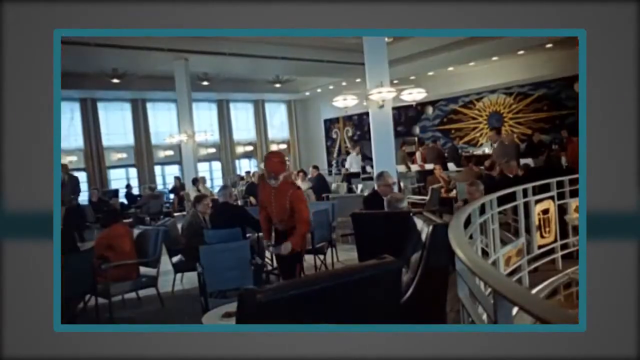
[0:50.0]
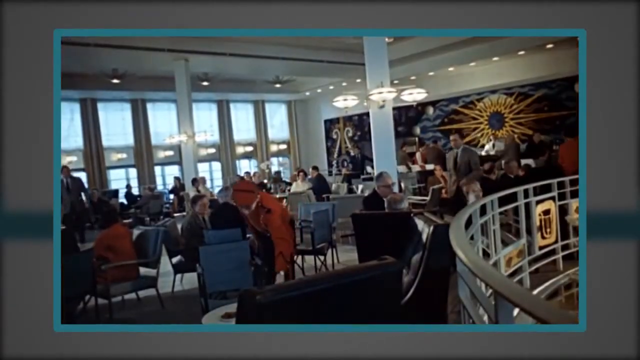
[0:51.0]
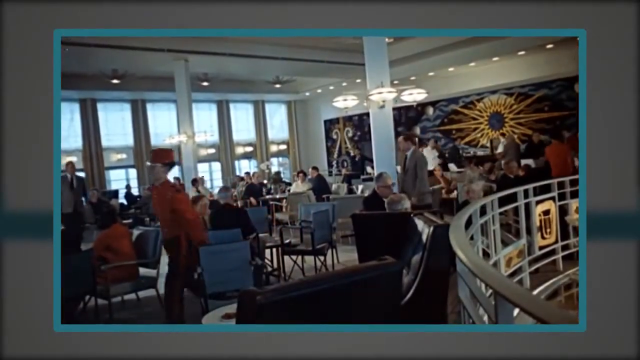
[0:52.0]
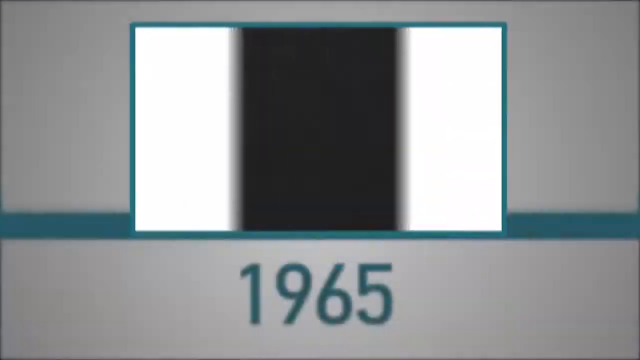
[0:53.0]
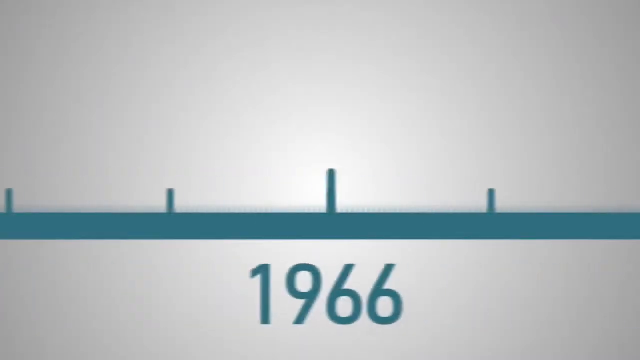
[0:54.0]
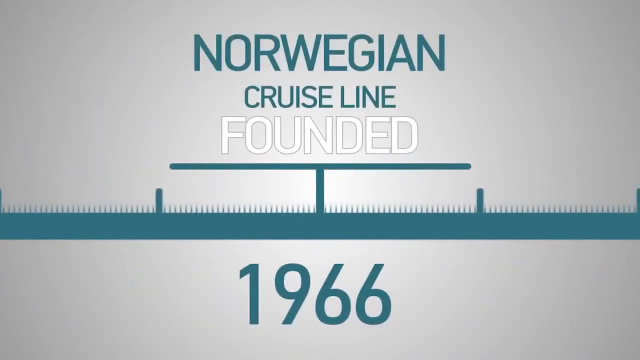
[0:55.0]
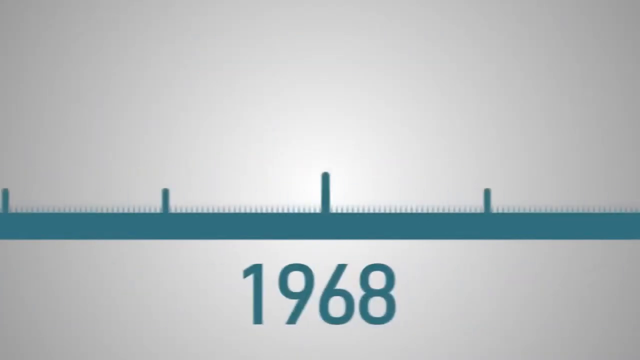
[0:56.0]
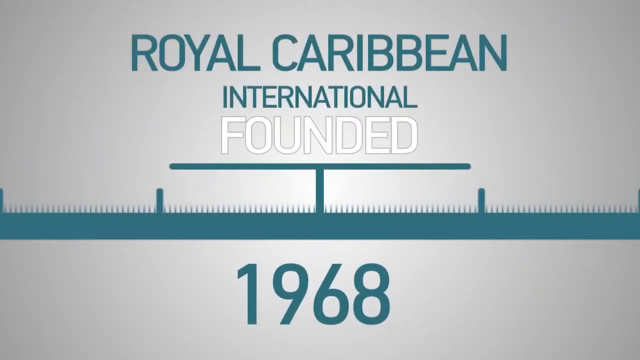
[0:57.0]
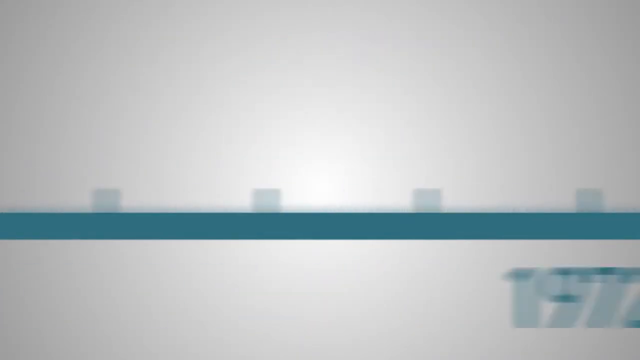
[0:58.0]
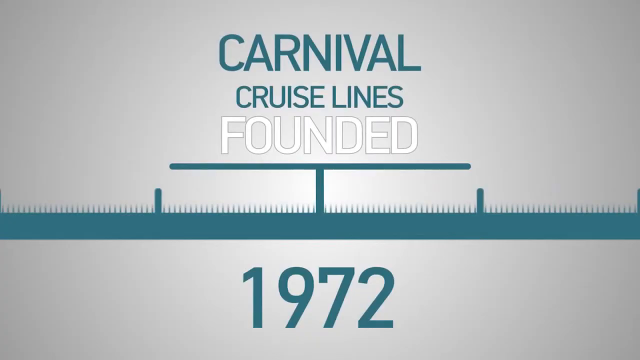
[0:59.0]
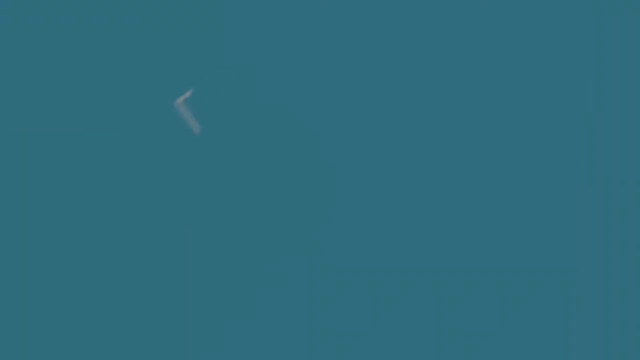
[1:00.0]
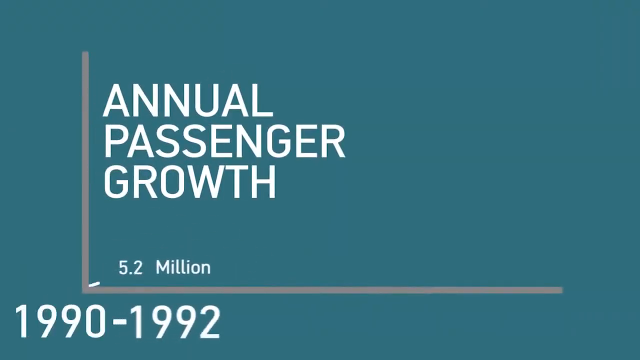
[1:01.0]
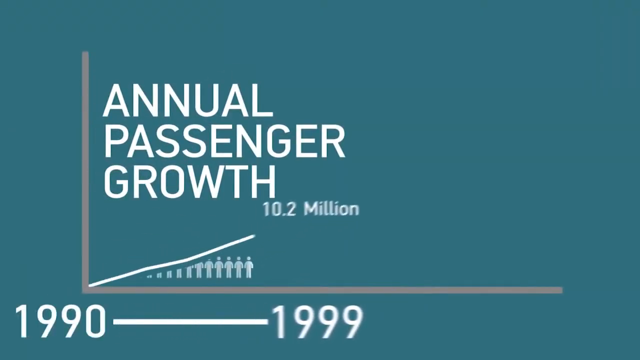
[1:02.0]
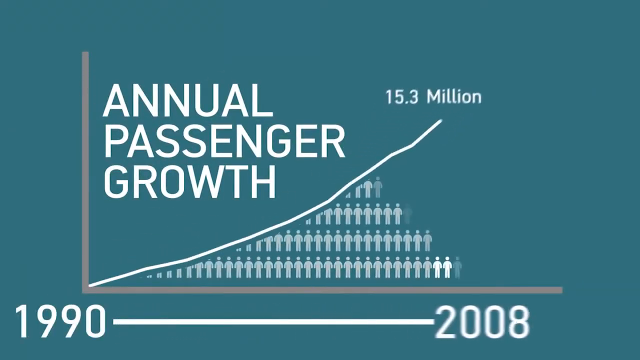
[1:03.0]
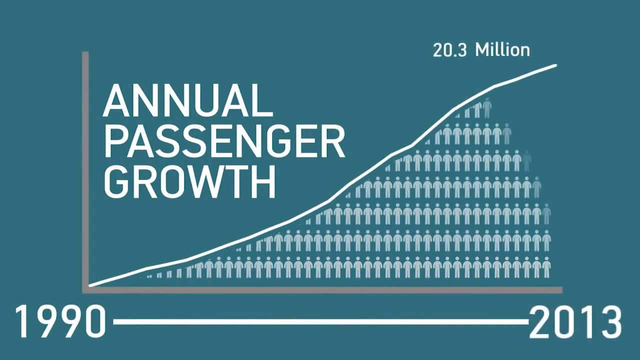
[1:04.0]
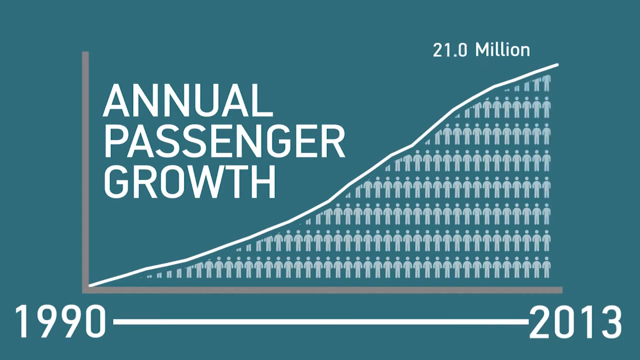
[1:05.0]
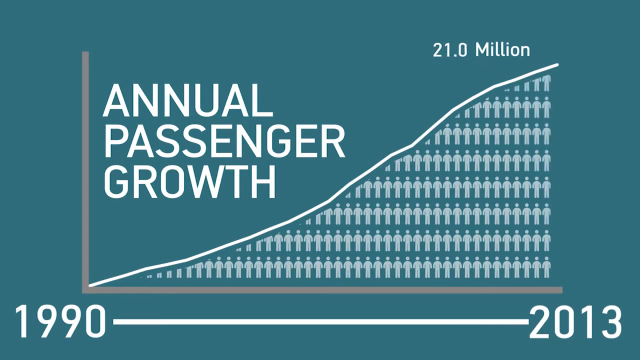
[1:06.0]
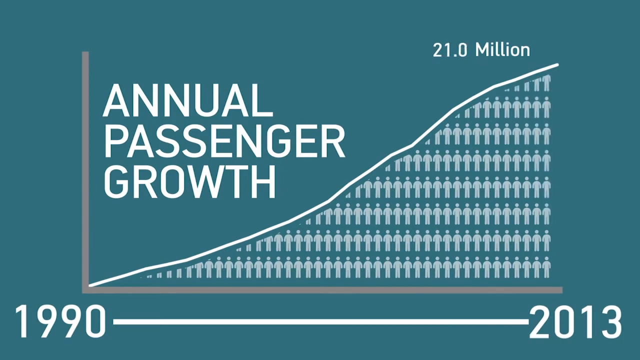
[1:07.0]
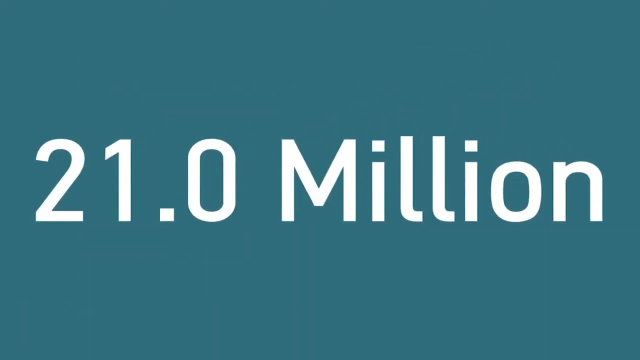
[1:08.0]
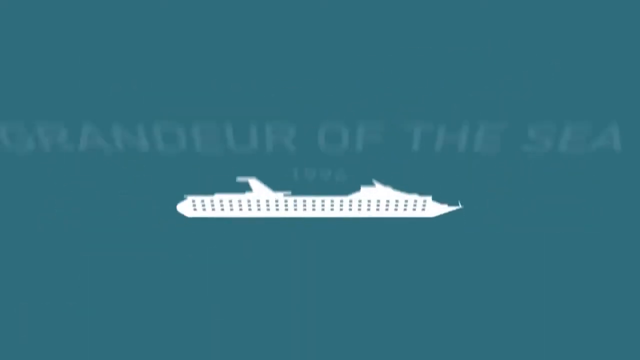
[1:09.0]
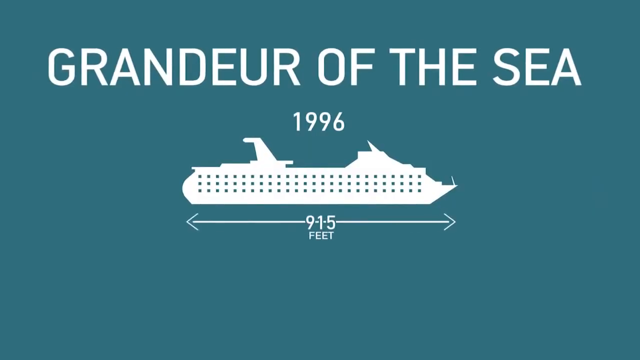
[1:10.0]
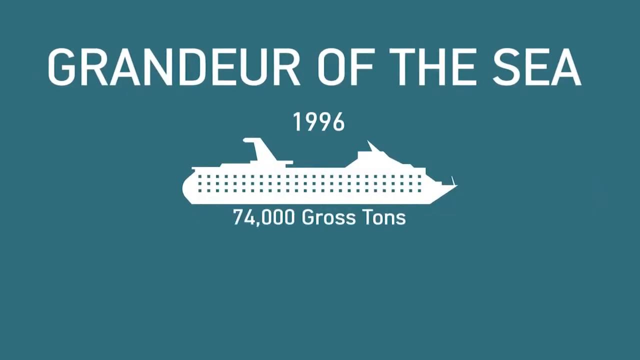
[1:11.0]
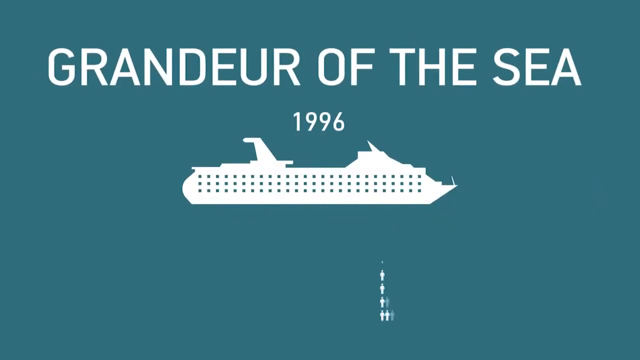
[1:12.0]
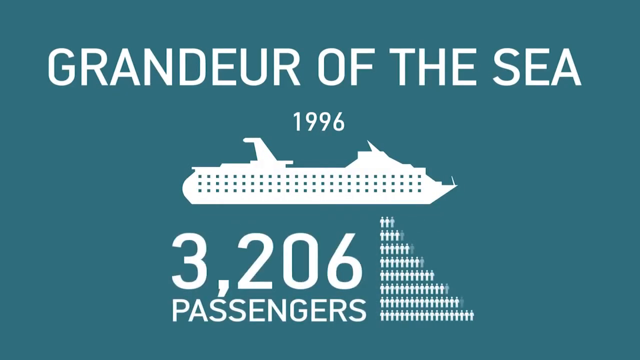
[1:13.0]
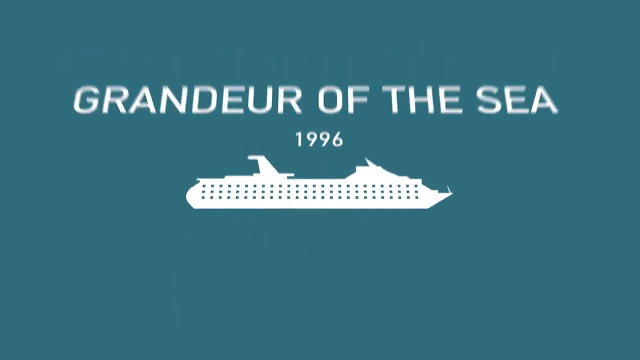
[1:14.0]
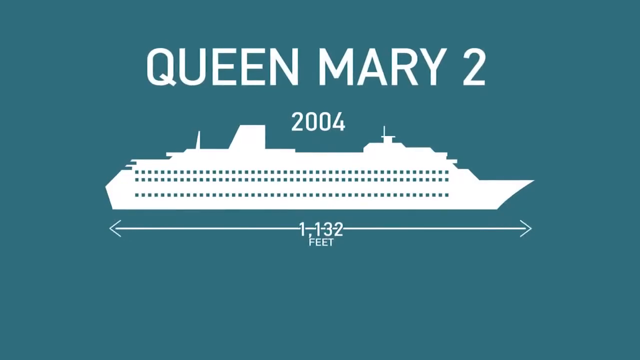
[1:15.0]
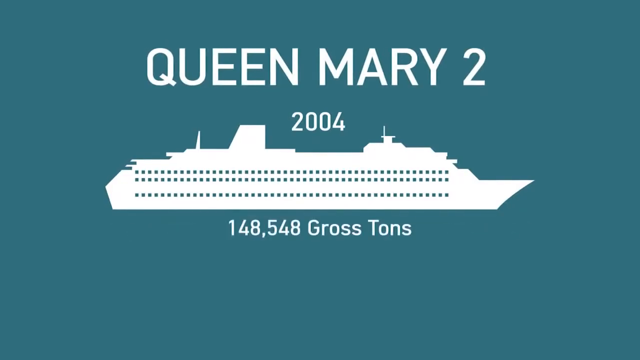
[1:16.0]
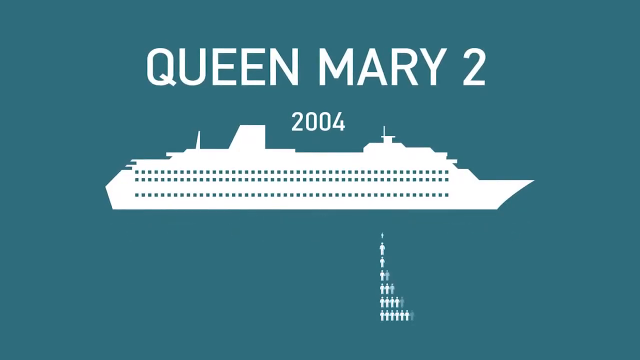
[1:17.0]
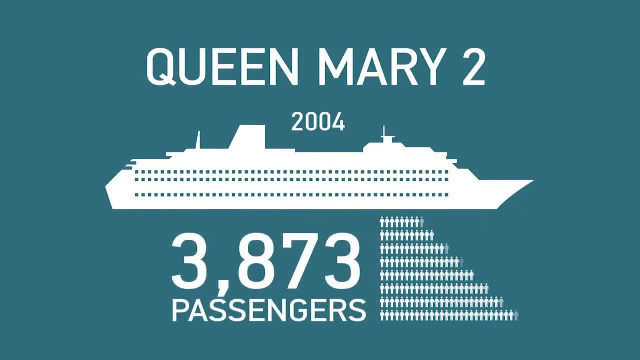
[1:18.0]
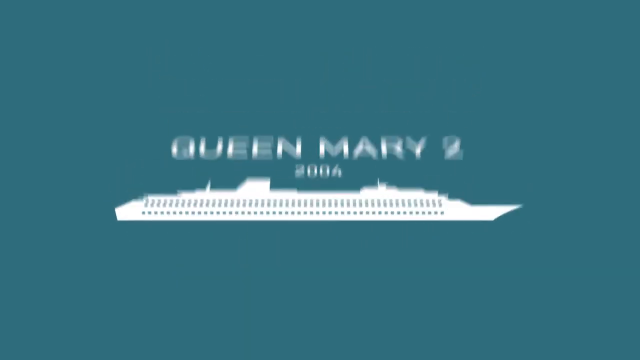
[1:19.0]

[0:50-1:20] A very colorful cruise ship interior, apparently from 1965, has a painting with a kind of starburst design on the wall, people sitting at tables eating and socializing, and staff standing and walking around. The timeline returns, now at "1966", with "Norwegian Cruise Line founded" at the top; "founded" is in white font and the rest in teal. It moves down to "1968" with "Royal Caribbean International founded", then slides down to "1972" with "Carnival Cruise Lines founded". Next comes a teal backdrop with the title "Annual passenger growth" in white all-caps sans serif text on three lines. A line graph starts from the bottom zero point and rises gradually on a steady trajectory to the top corner, where it says "21.0 million", with many little bodies in the area below the white line. A graphic then says "Grandeur of the Sea, 1996" with a white outline of a cruise ship and "3,206 passengers" underneath, plus more little bodies arranged in a kind of triangular pattern: two or three at the top, then five, then six, increasing further down. It switches to "Queen Mary 2, 2004", another ship outline, with "148,548 gross tons" and "3,873 passengers" and outlined silhouettes of people arranged similarly. Then "Oasis of the Sea" appears with "2009", a very large ship silhouette outline, and "1,181 feet".